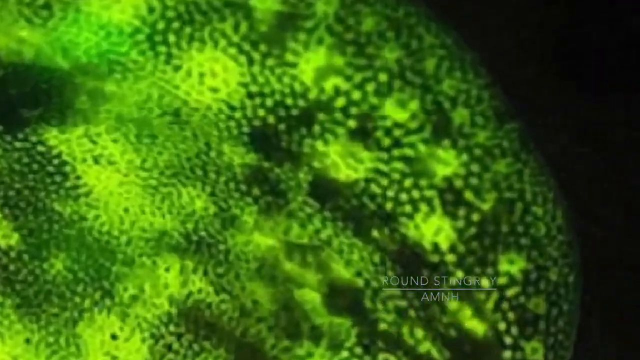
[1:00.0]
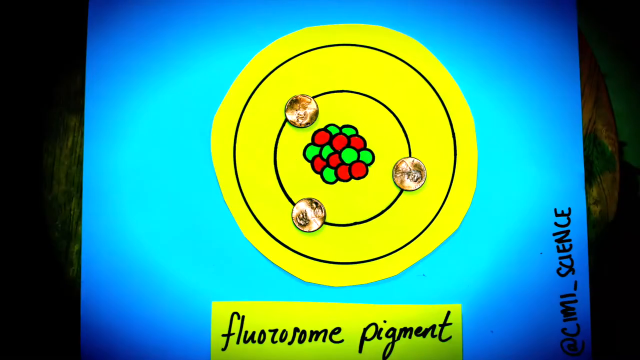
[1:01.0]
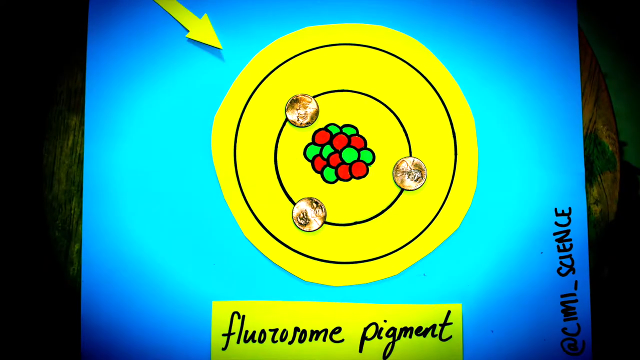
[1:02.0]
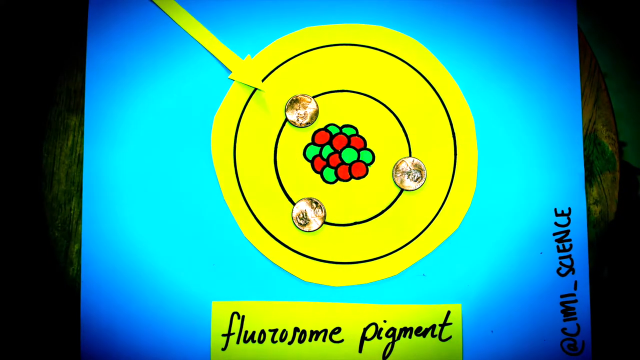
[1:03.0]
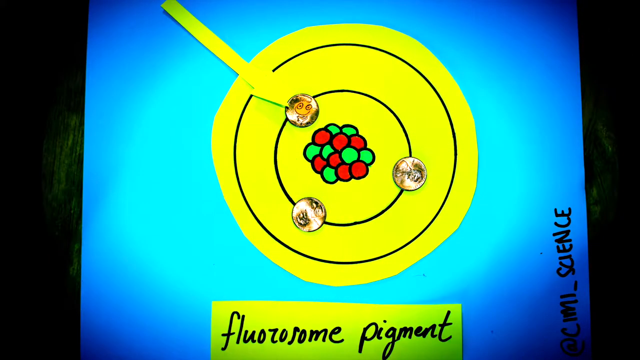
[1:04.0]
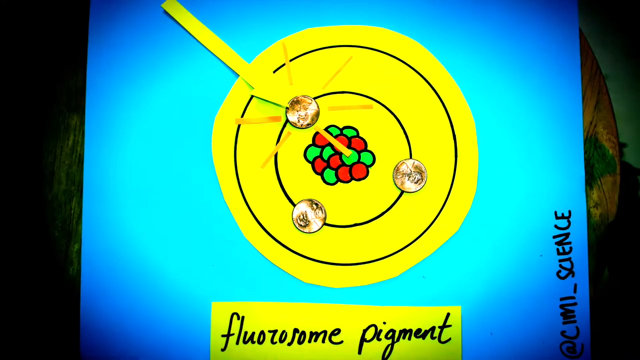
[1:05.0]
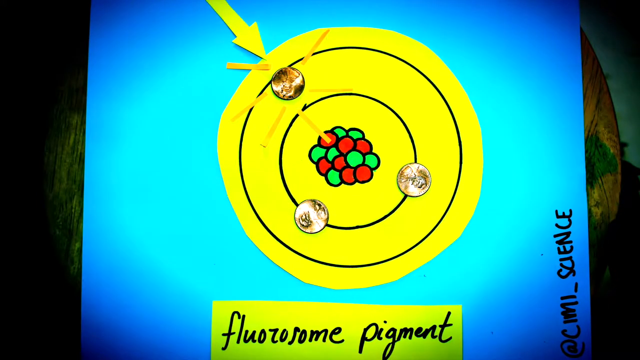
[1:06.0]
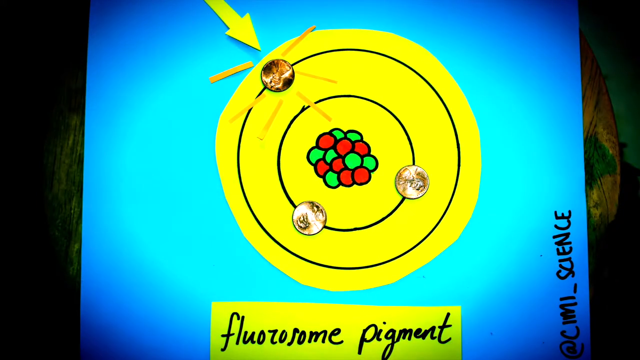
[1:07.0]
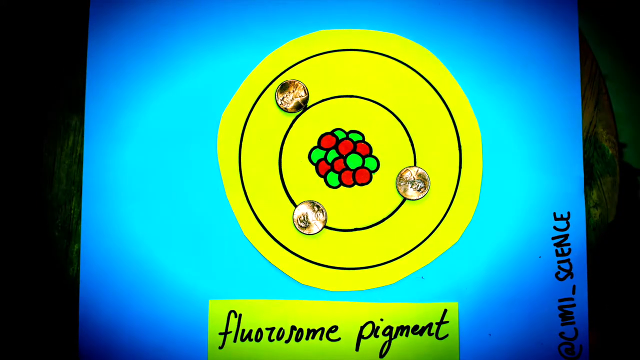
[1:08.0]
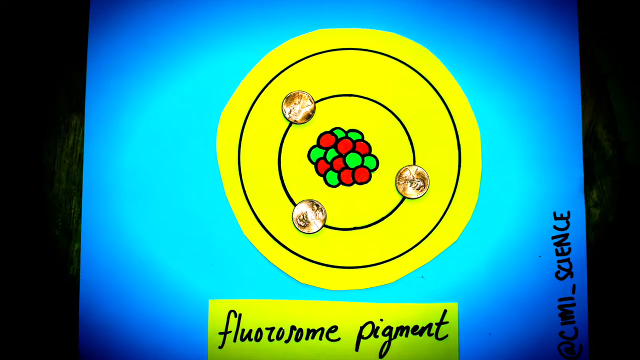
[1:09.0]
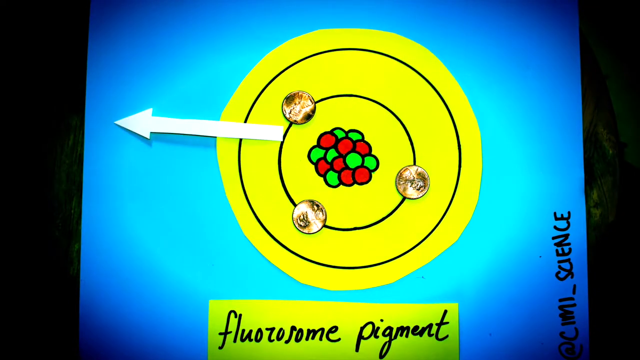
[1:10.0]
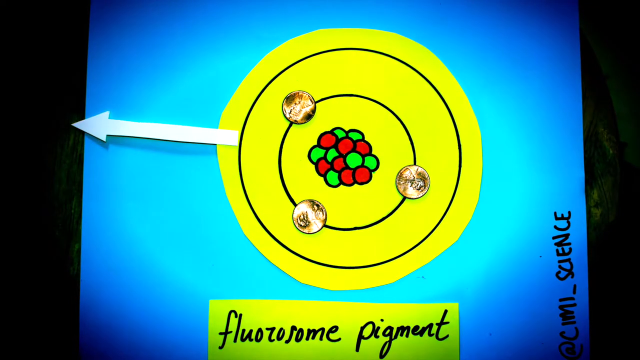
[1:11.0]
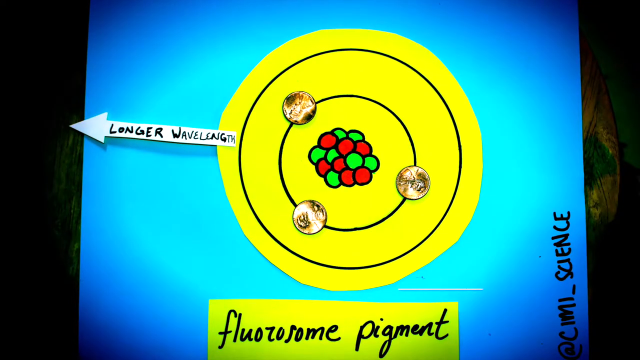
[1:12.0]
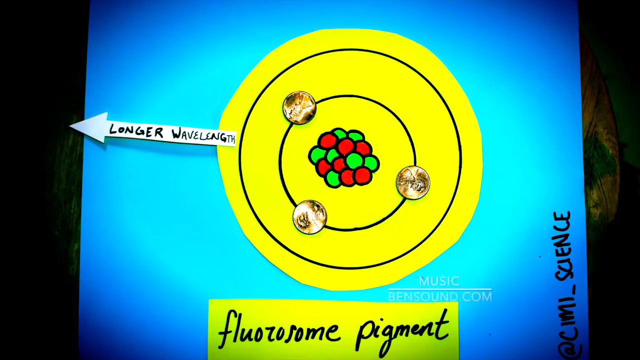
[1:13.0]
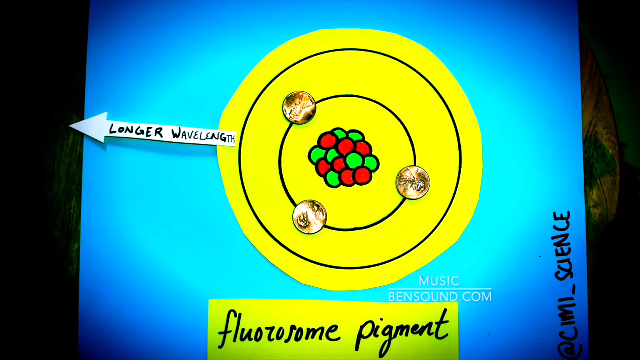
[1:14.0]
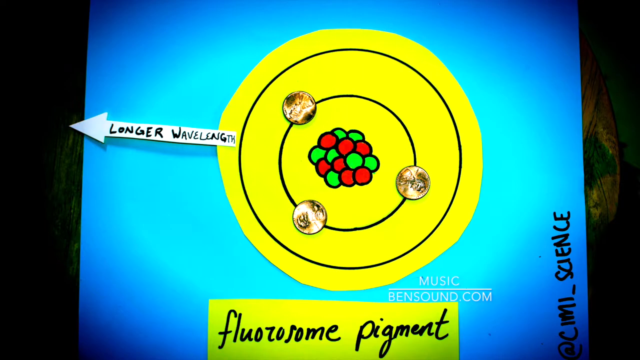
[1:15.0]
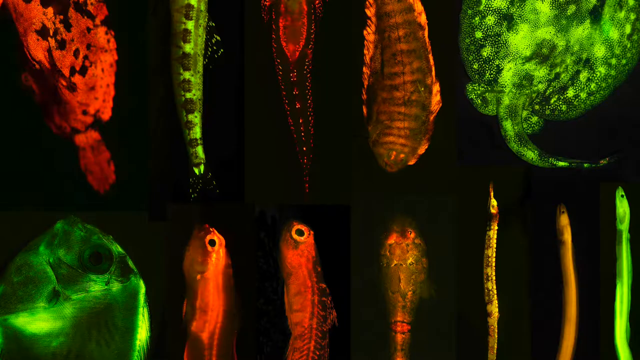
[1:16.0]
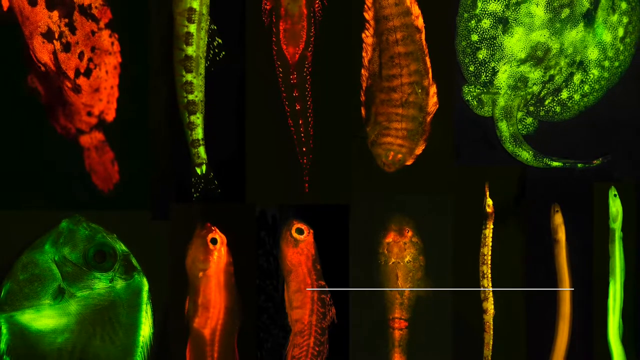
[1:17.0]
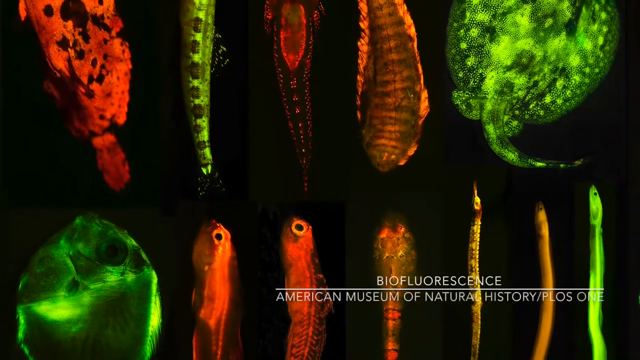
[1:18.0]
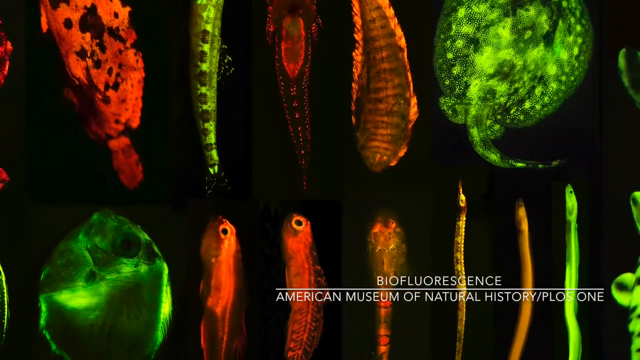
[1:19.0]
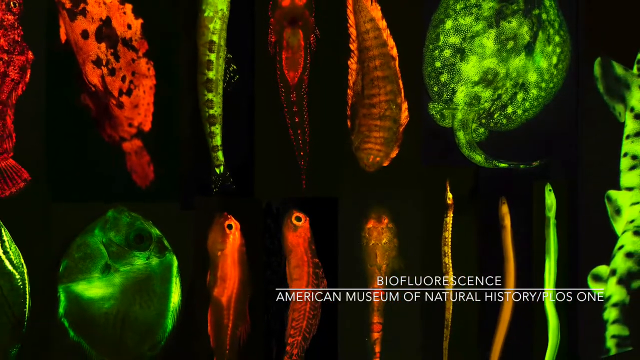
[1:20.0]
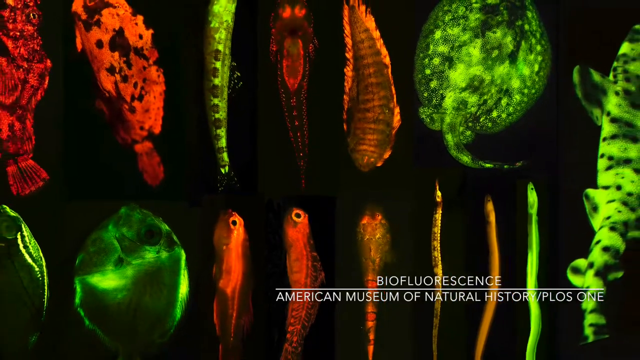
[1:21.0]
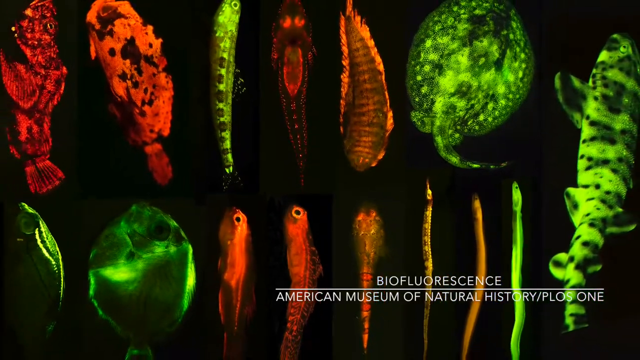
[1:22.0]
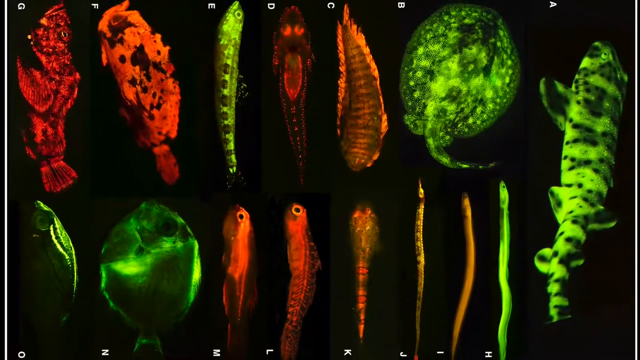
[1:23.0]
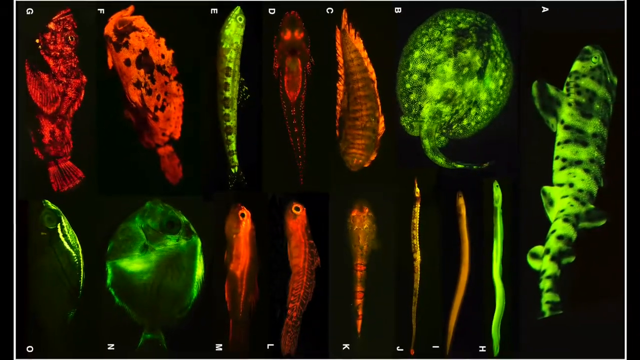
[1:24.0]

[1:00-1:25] The video stays on aquatic life, showing another fish with a description, the animals illuminated by lights of different colours. A display of the fish is followed by a hand-drawn illustration: small red and green balls inside an inner circle, an arrow bringing another ball into the first circle, and an arrow coming out of the inner circle. On a yellow background with black lines drawn around them are two circles, with arrows pointing toward them and then outward. Against a blue background is an illustration of fluorescent pigment. Pictures of different aquatic animals follow, with a caption reading "biofluorescence" and "American Museum of Natural History".